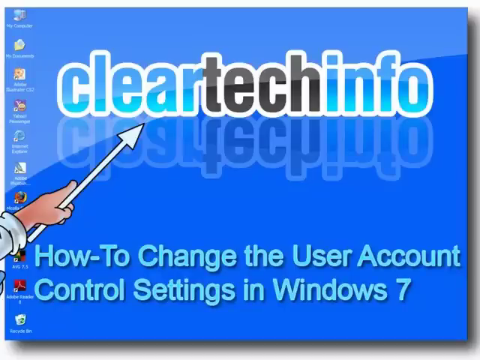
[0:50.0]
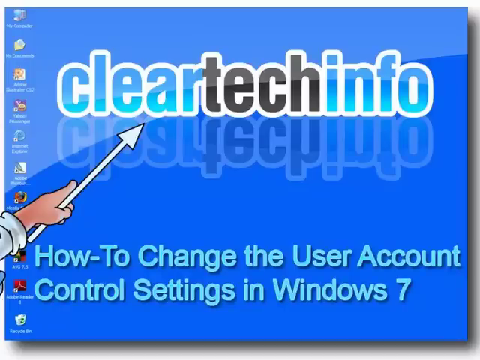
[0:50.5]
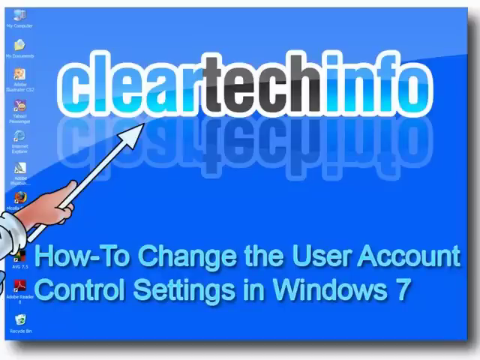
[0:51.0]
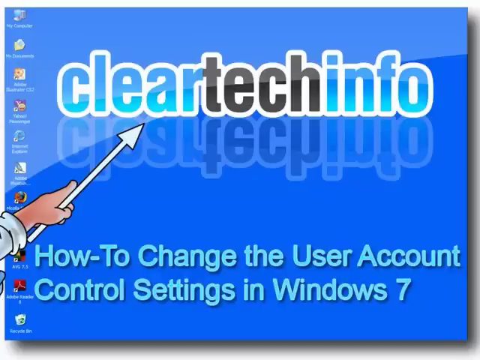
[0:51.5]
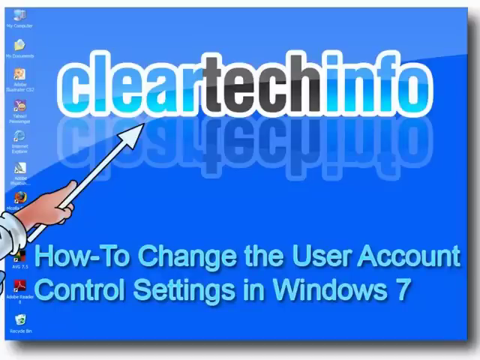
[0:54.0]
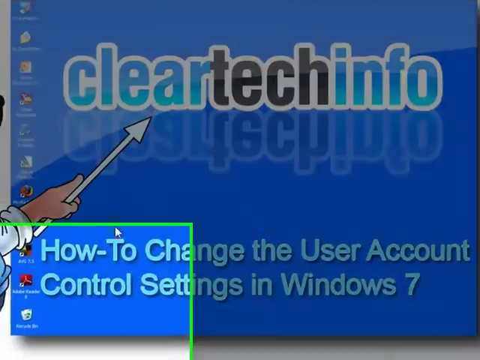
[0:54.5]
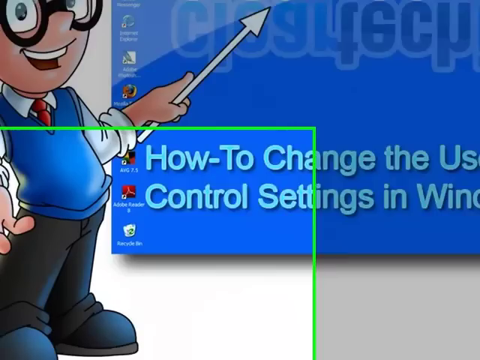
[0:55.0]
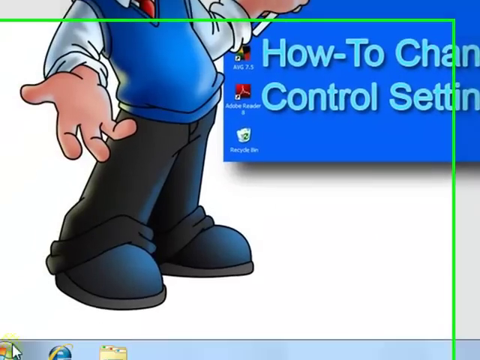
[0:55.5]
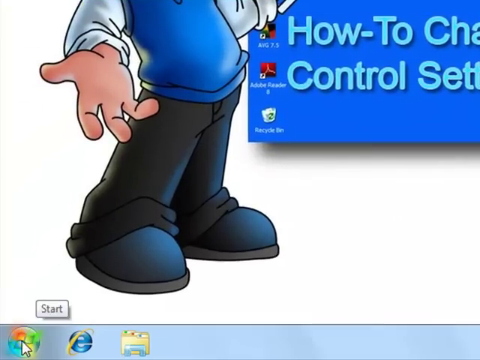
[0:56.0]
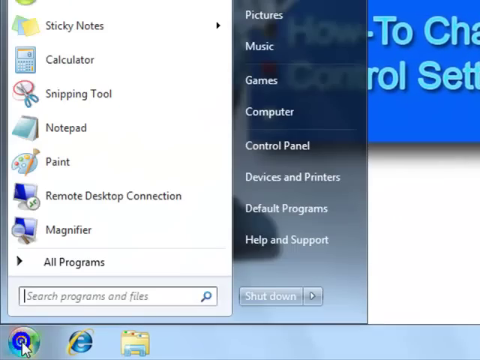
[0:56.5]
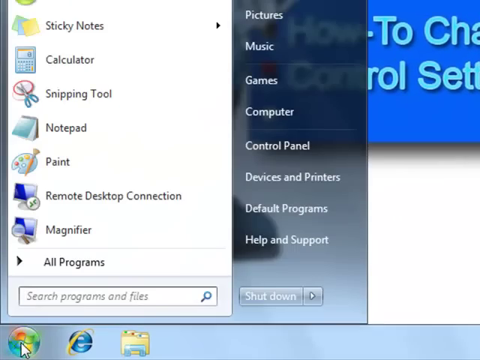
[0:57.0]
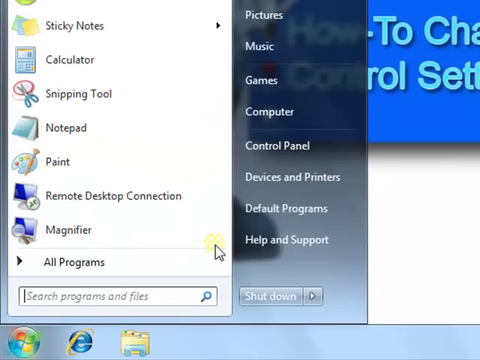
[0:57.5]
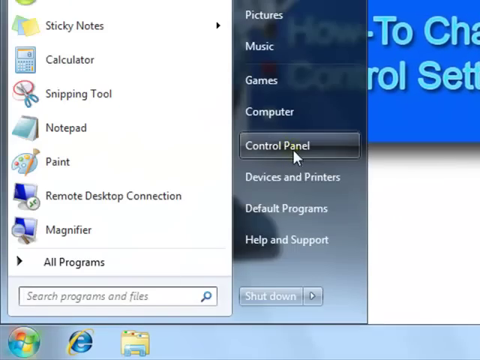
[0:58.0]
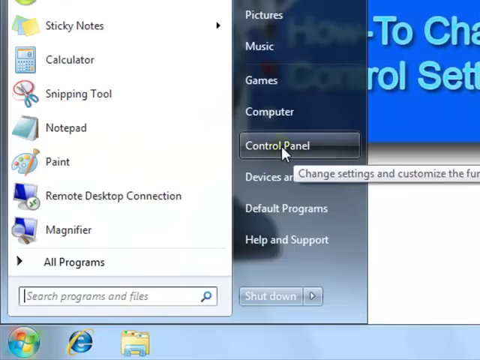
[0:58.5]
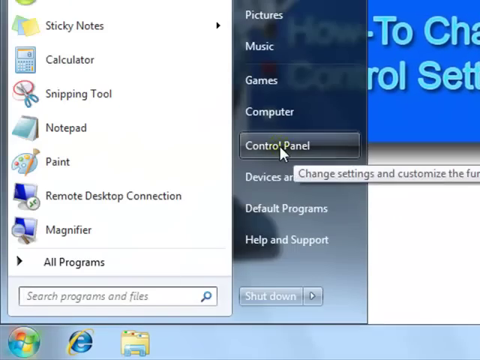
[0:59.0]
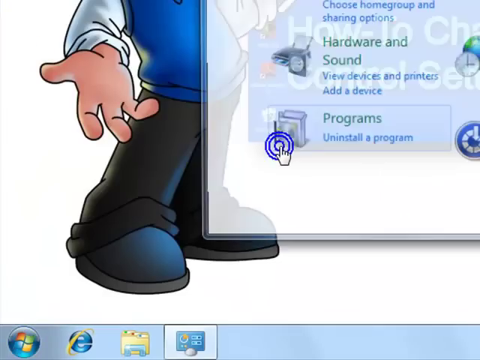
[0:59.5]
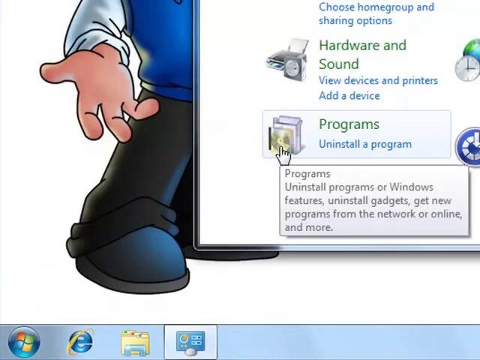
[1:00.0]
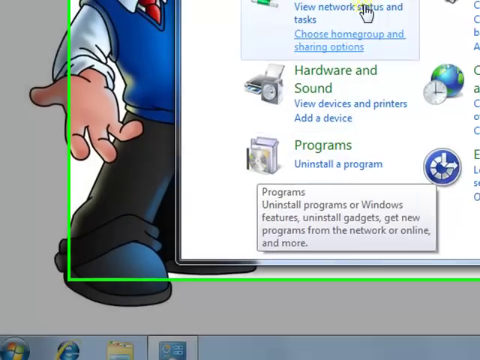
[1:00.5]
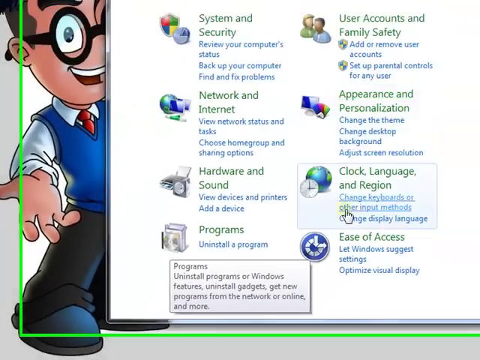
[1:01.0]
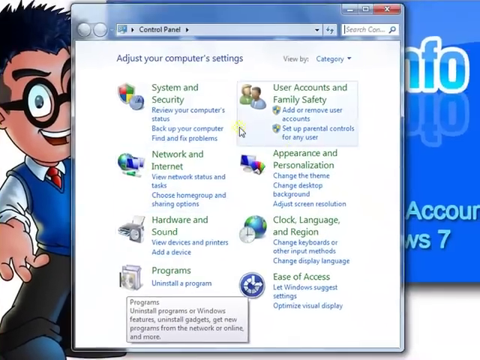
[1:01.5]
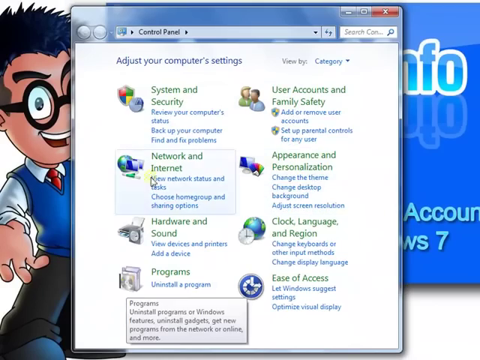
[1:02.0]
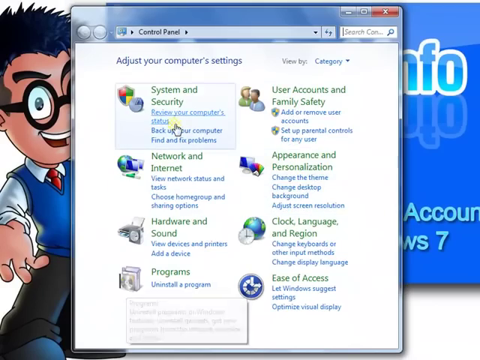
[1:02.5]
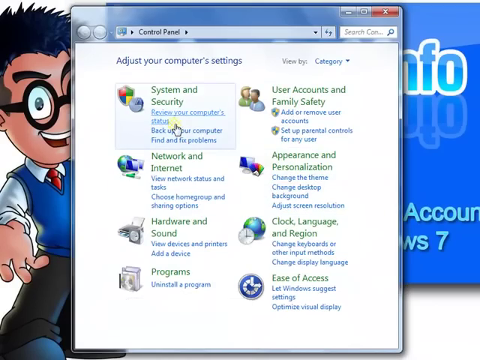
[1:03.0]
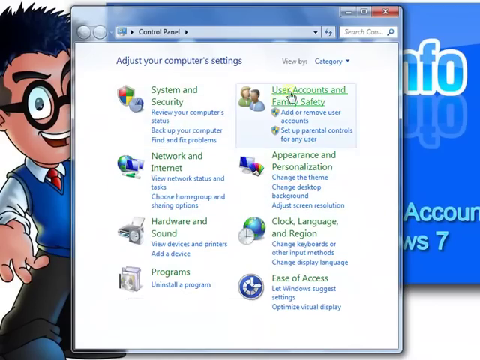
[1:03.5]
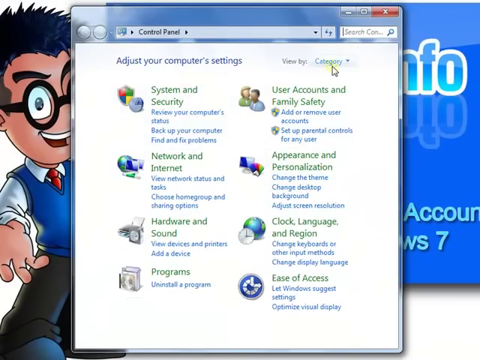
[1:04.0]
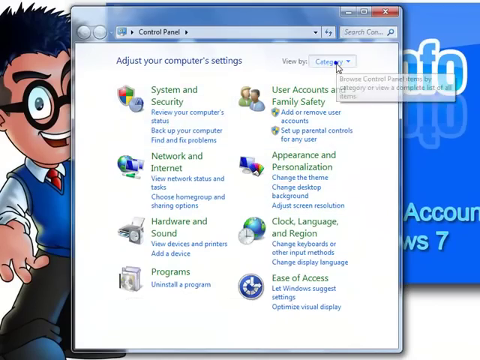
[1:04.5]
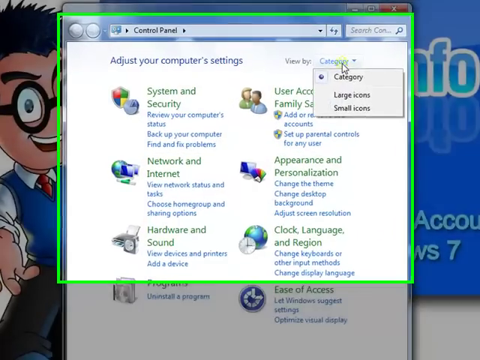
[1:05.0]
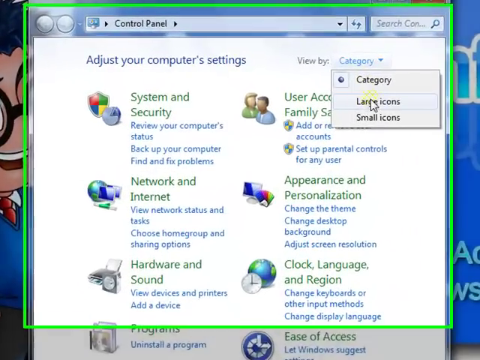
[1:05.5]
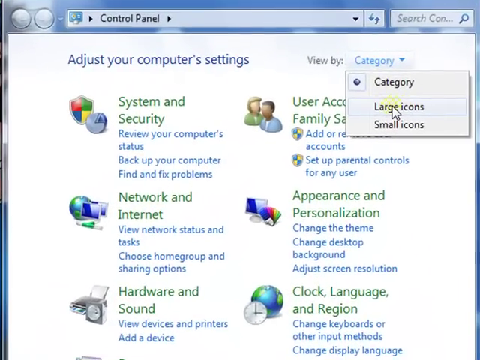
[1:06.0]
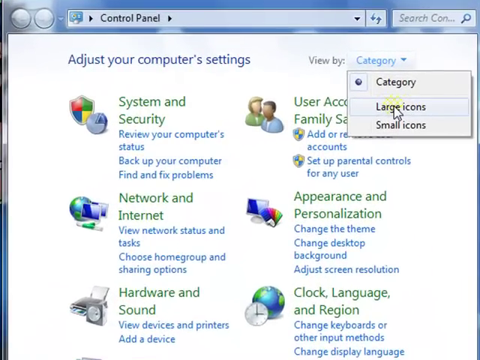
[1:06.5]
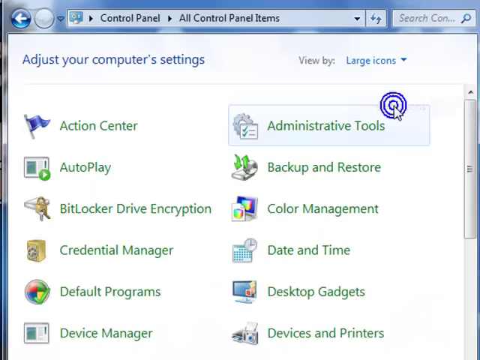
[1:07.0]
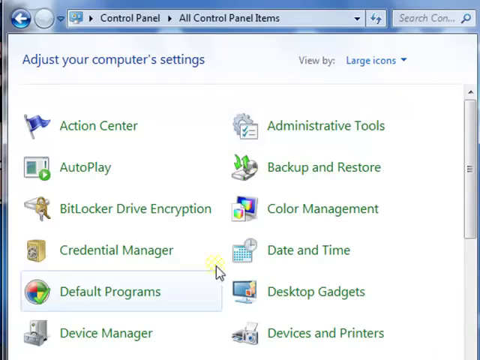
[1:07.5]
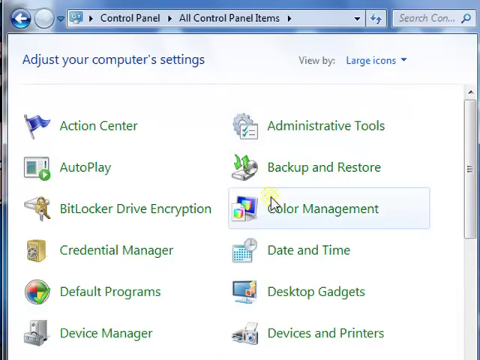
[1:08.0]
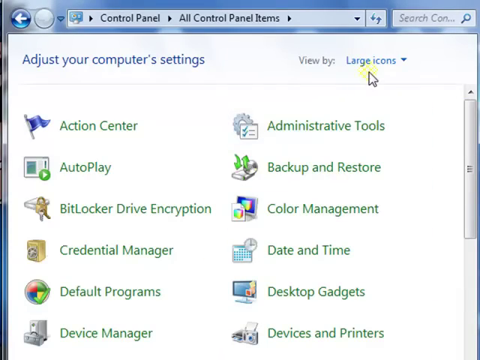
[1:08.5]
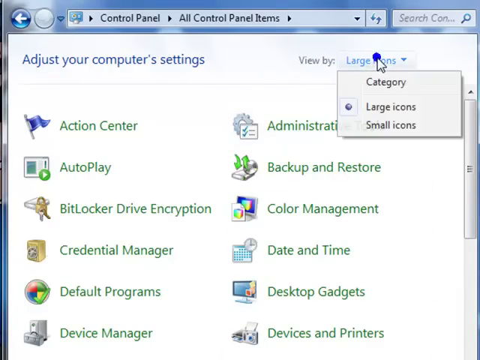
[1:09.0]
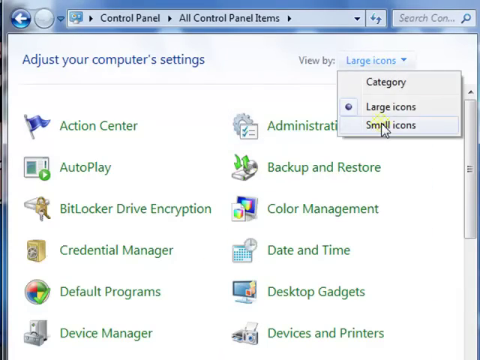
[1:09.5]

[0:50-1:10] The blue background shows the person in the white shirt with a white arrow, coming in from the bottom left-hand side, pointing at the Clear Tech Info logo. Windows icons run down the left-hand side of the page, including Internet Explorer, Adobe and Mozilla Firefox. The shot holds on this main page, then scrolls down to the bottom left, where a nerd-looking type of guy appears. Then there is a white background with Start at the very bottom. The Windows 7 Start icon is clicked and a window pops up. Categories in the upper right is clicked and changed to large icons, making all the icons bigger, and then small icons is clicked, making the icons smaller again.